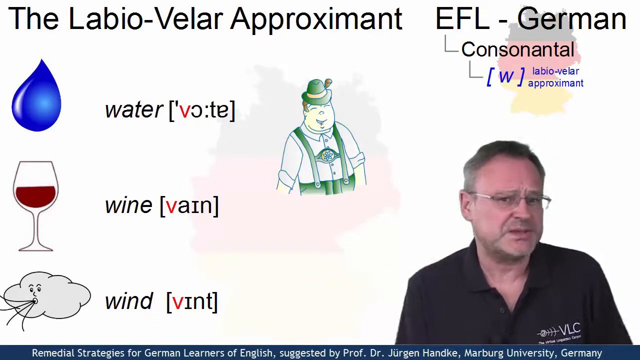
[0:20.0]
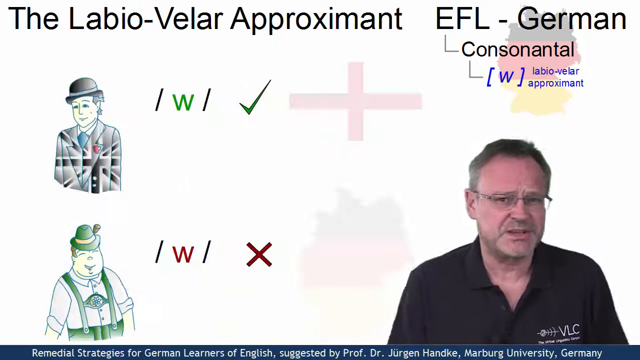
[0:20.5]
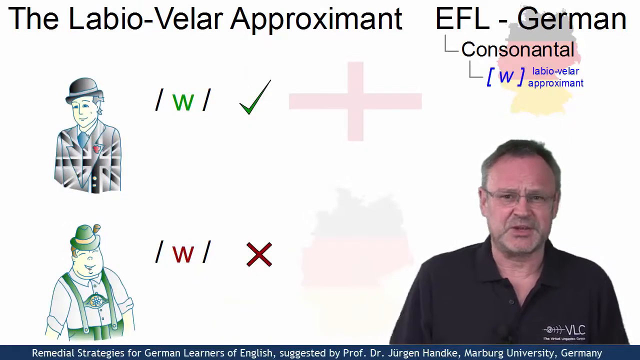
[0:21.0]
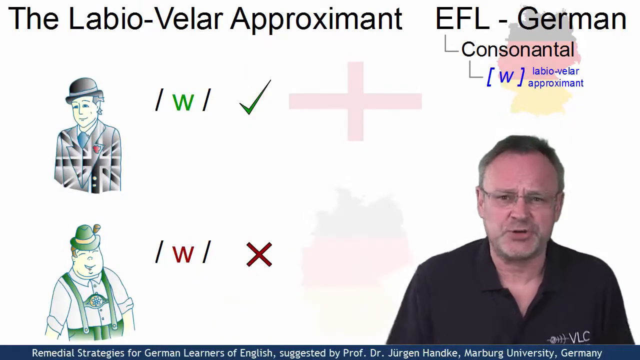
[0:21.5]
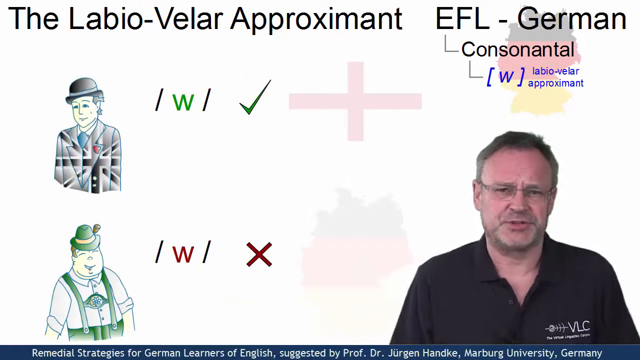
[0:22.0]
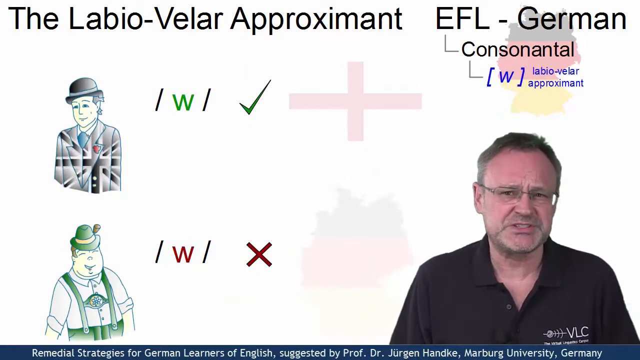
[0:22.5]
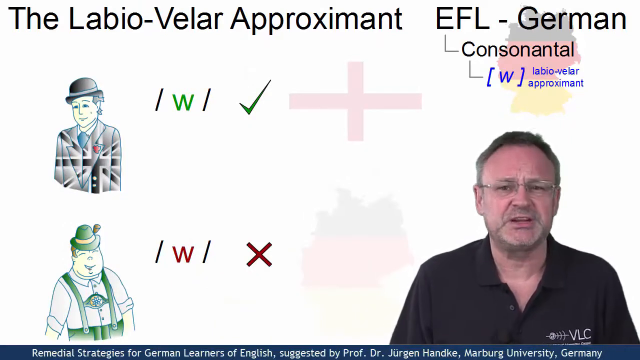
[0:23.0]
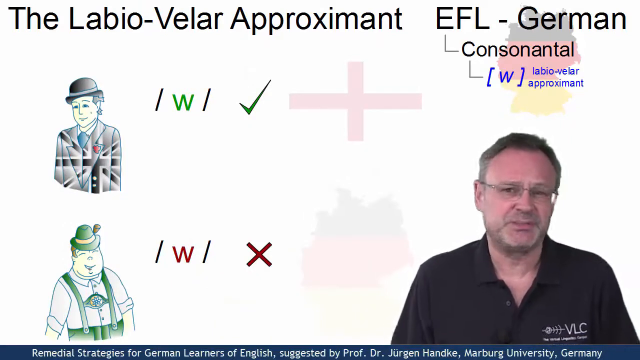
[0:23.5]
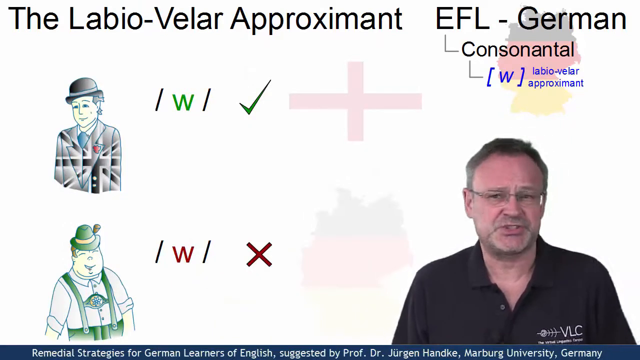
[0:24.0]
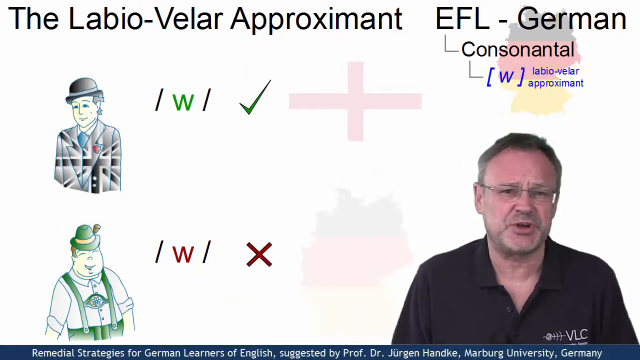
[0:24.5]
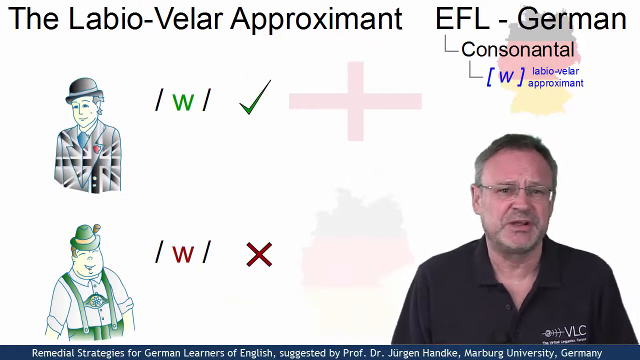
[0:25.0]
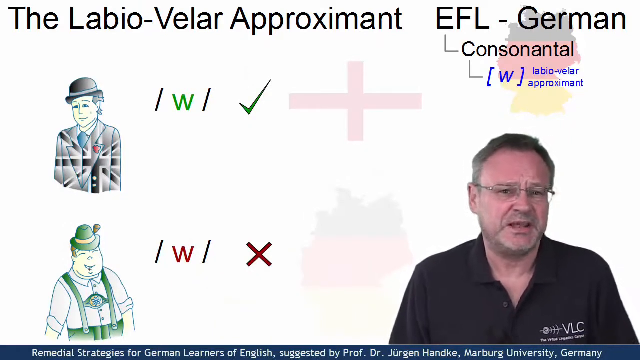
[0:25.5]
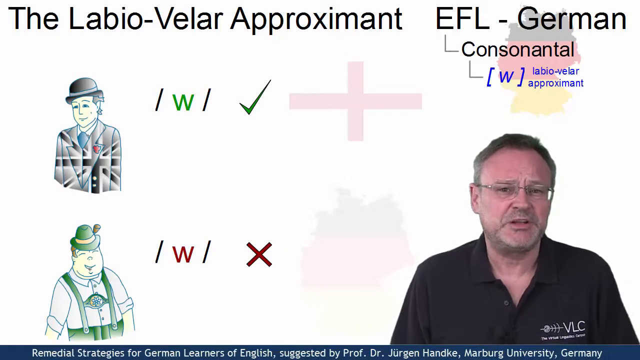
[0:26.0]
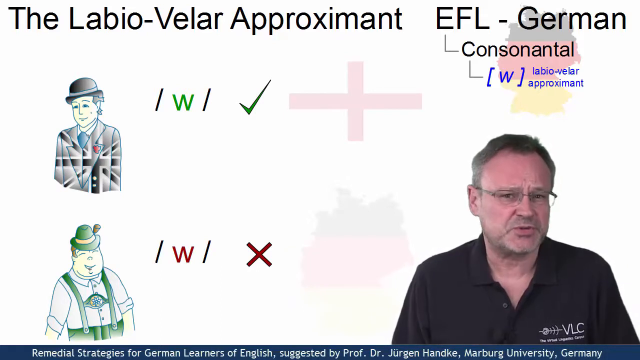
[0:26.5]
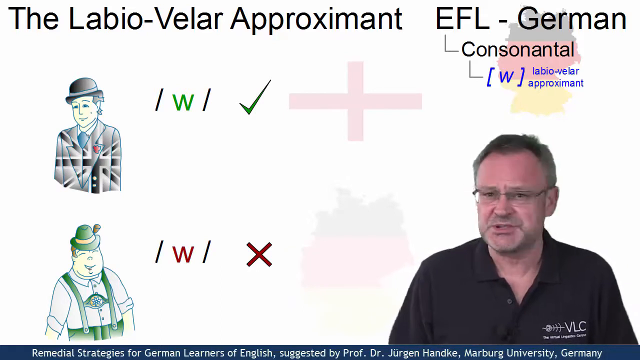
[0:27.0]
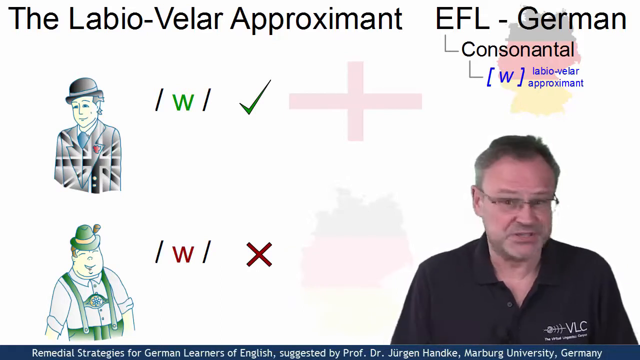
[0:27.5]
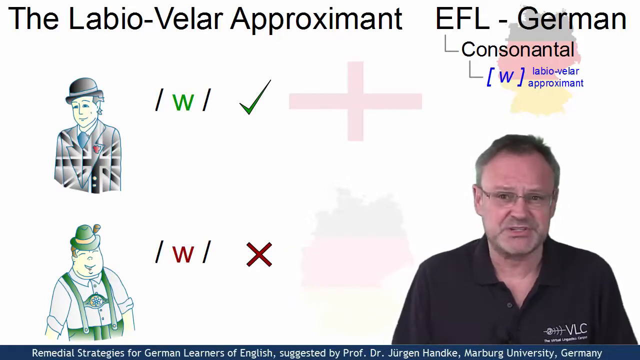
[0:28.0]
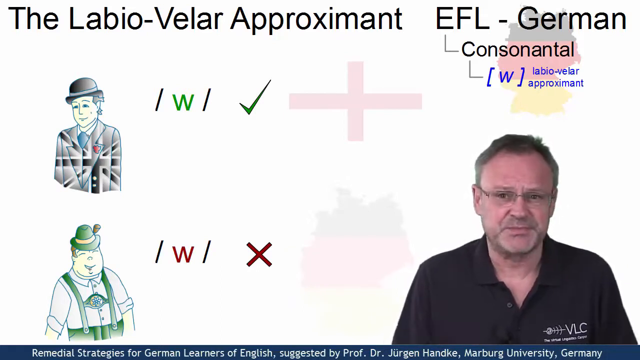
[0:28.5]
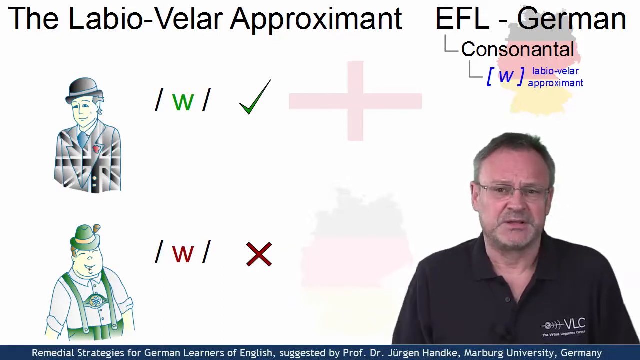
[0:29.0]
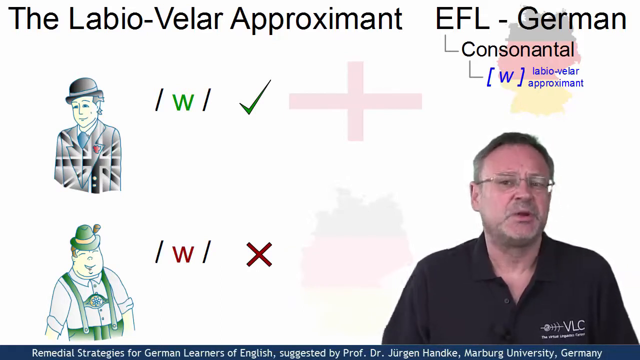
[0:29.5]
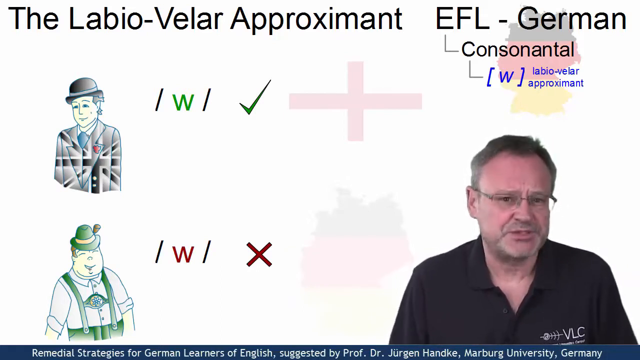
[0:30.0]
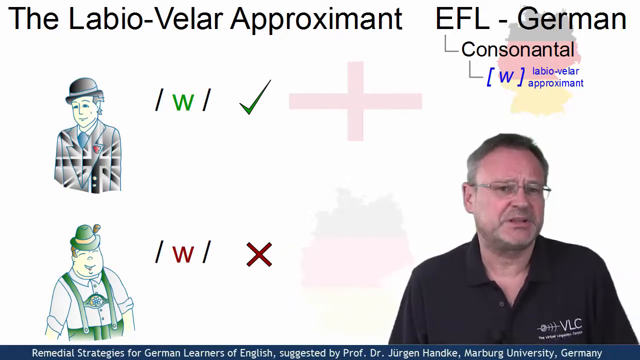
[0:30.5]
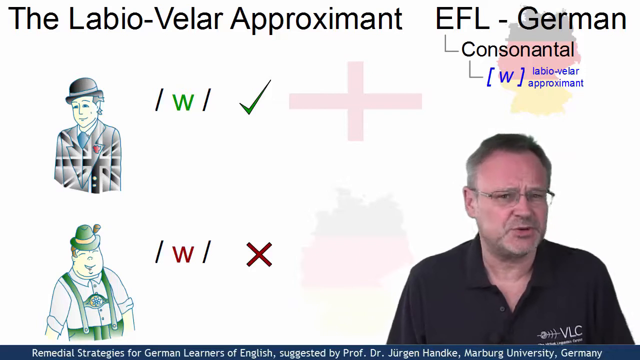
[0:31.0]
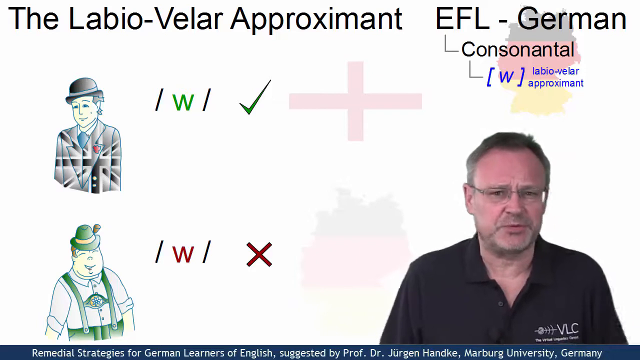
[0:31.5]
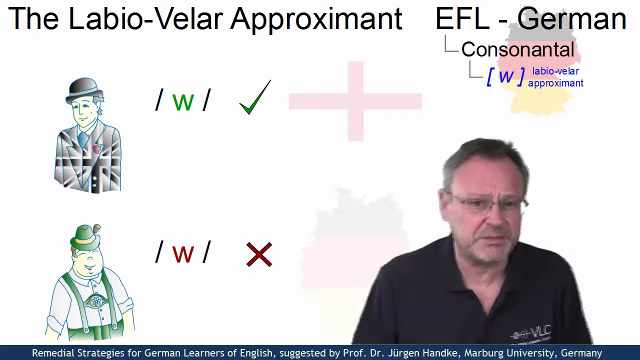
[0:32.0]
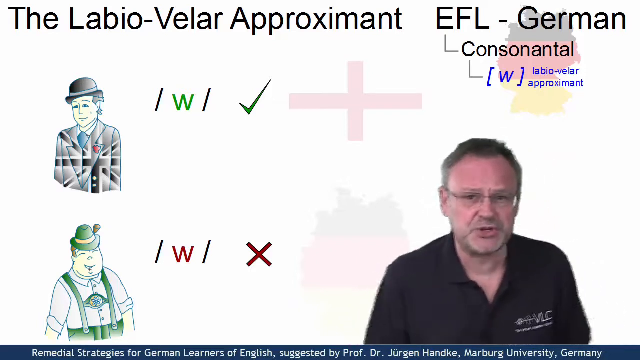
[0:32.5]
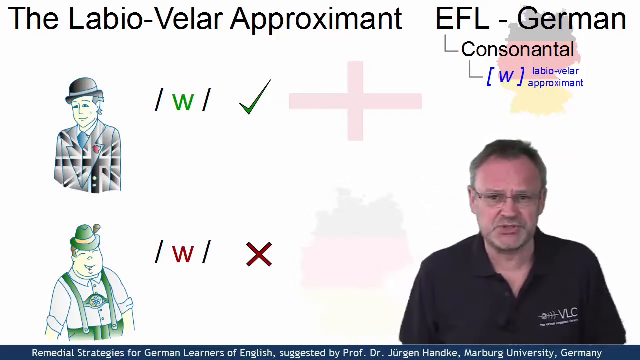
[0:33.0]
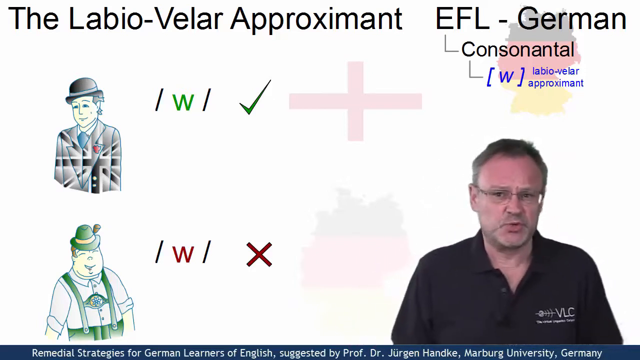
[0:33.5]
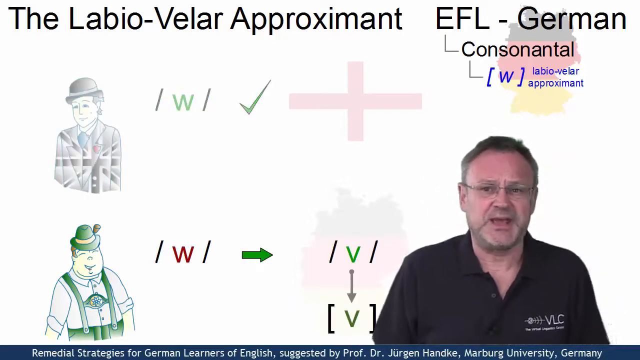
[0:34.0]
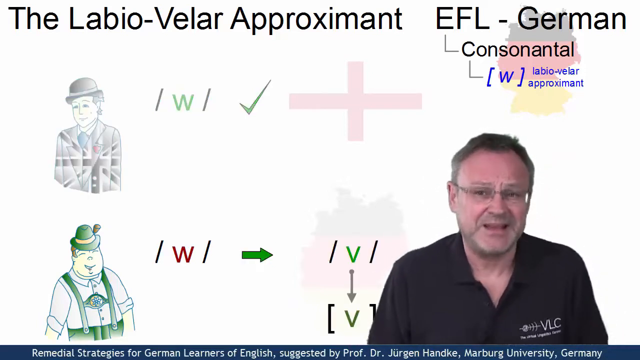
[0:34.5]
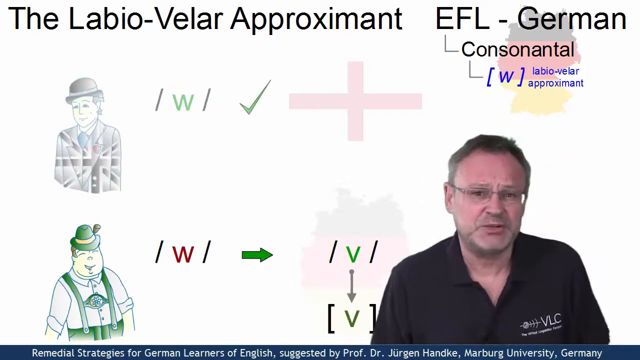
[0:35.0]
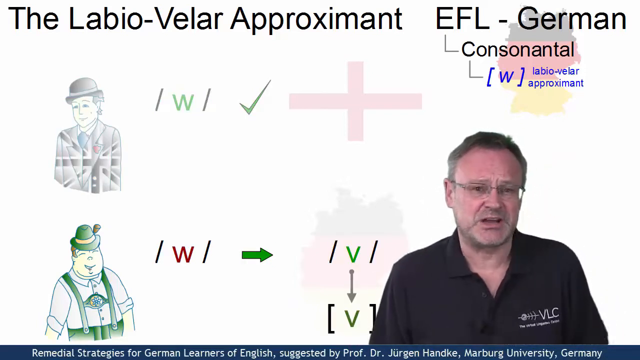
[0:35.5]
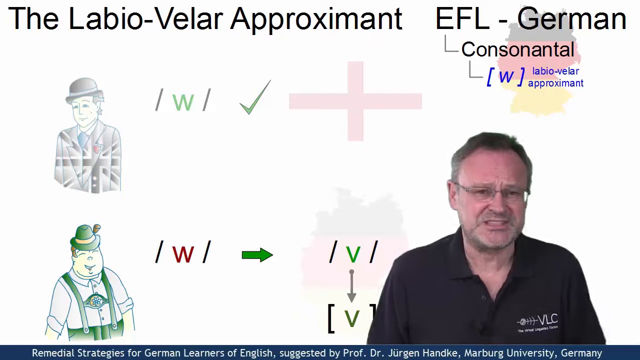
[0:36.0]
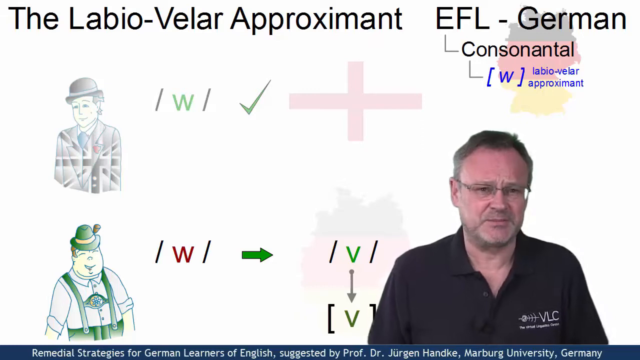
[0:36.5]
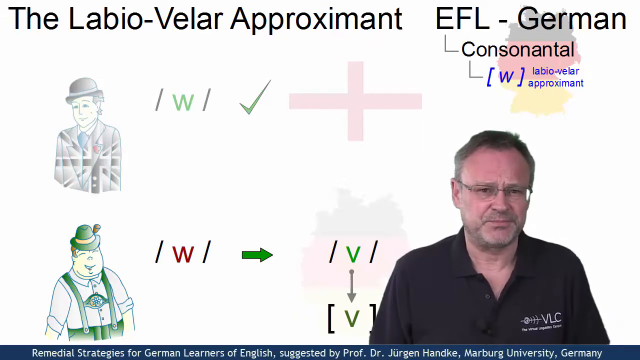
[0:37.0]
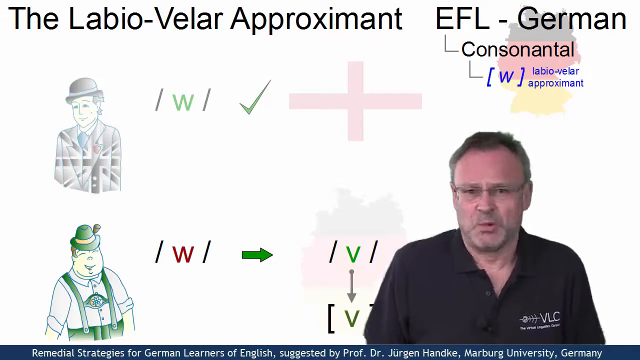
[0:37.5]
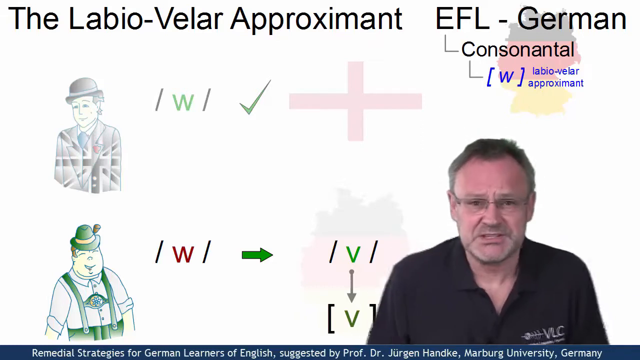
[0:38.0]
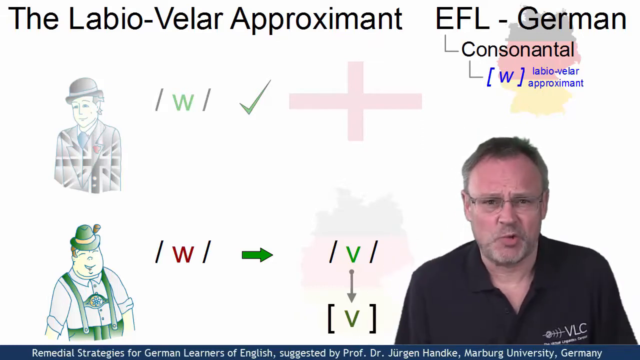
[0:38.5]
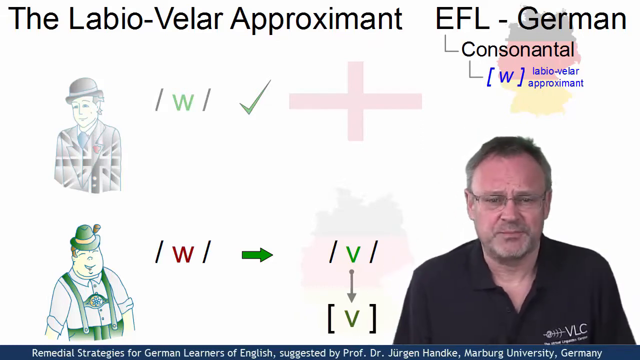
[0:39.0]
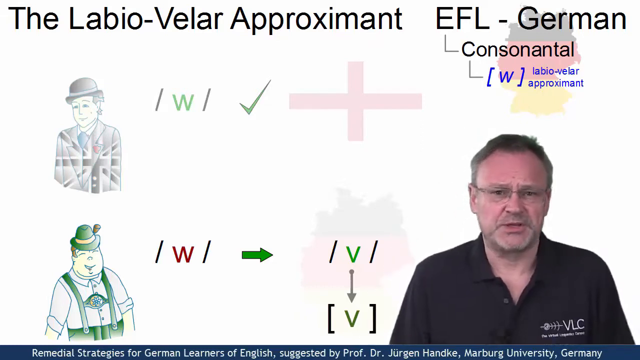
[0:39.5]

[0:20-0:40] The video continues with what seems to be a right pronunciation versus a wrong pronunciation, contrasting V and W. The setting seems to be a white screen. The man talks to the camera and seems very passionate. He wears glasses, and the top button of his shirt is undone; his clothing is very basic. He is the only person in the video, just sitting there talking to the camera. The subject is the labio-velar approximant, the way V and W are pronounced.